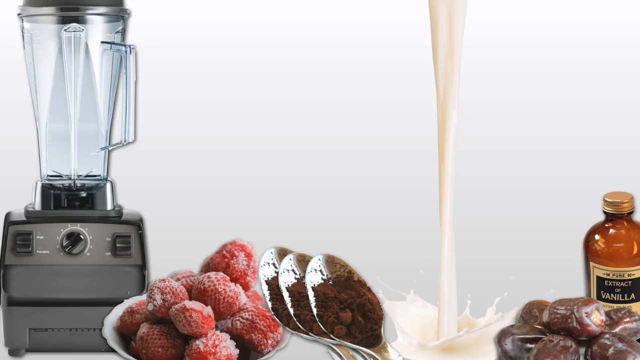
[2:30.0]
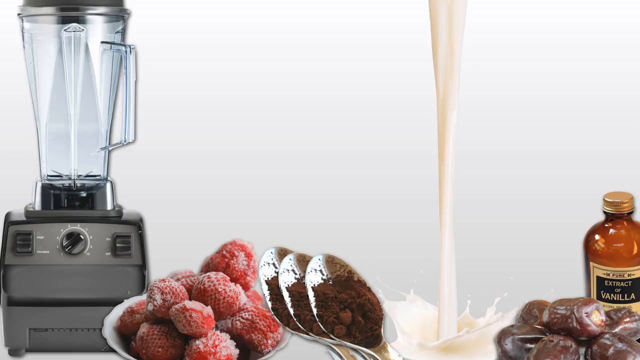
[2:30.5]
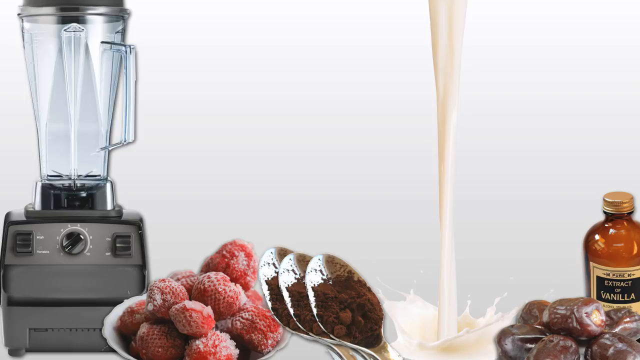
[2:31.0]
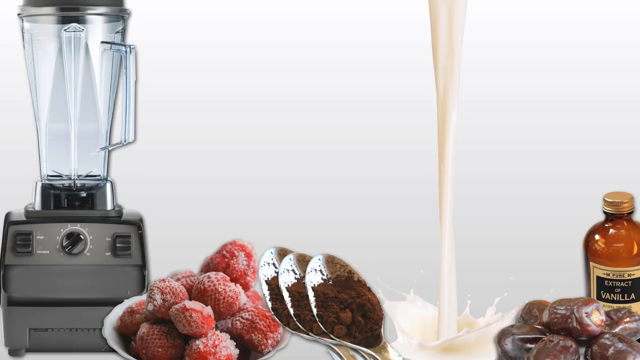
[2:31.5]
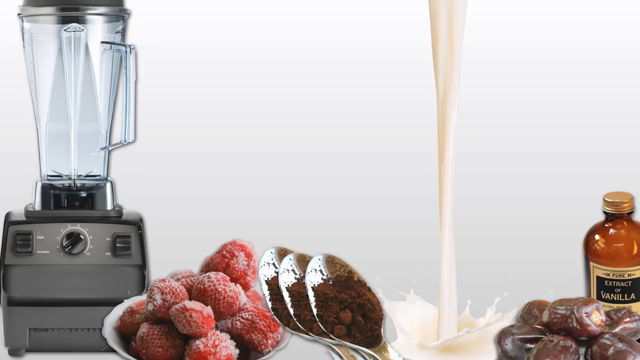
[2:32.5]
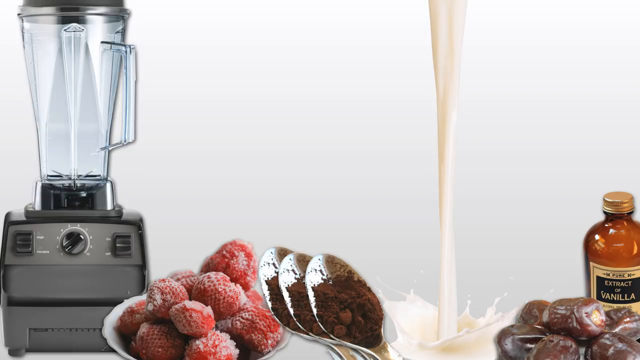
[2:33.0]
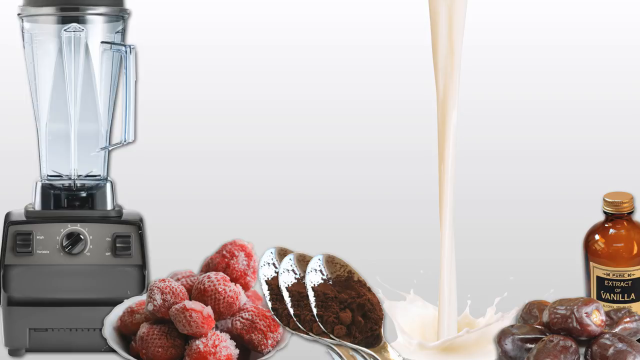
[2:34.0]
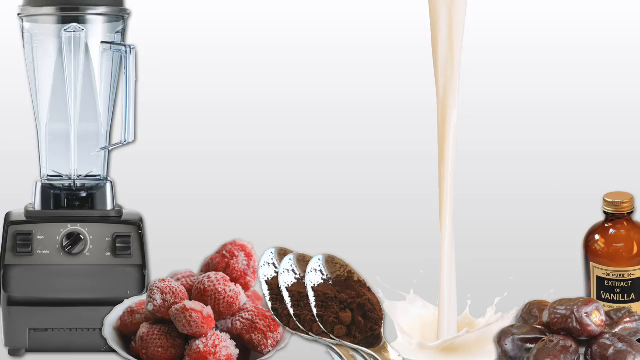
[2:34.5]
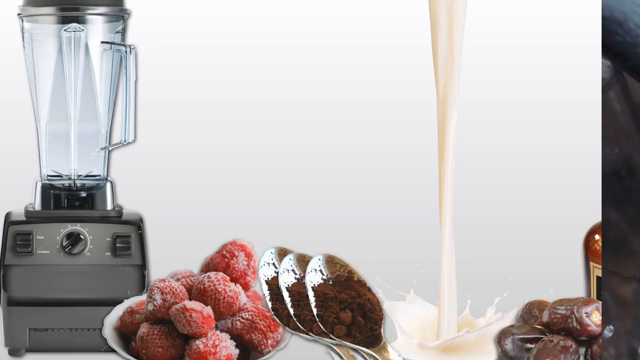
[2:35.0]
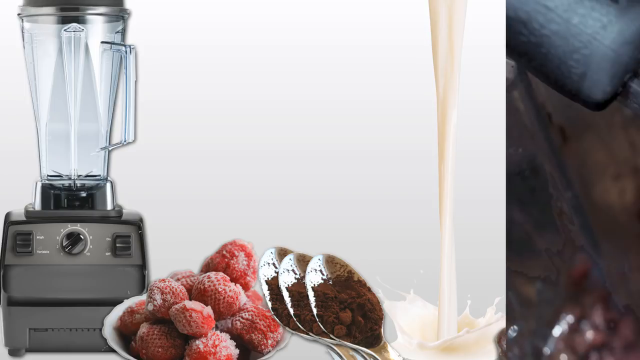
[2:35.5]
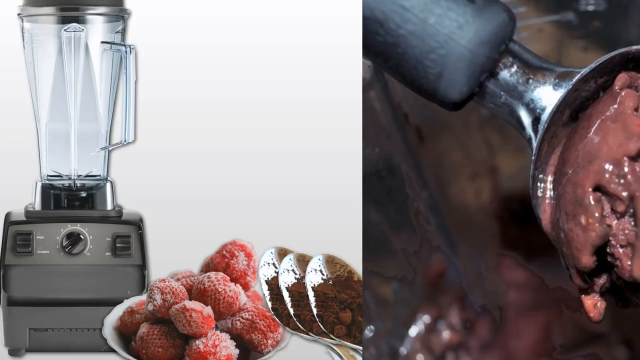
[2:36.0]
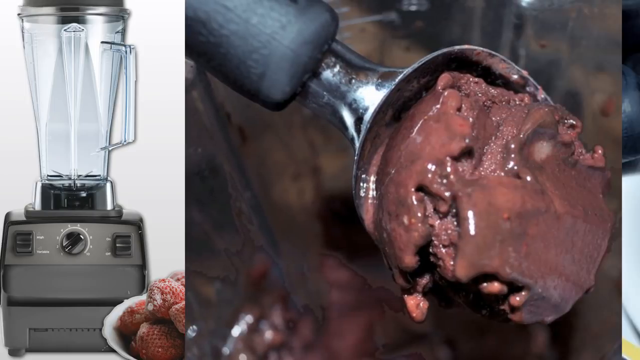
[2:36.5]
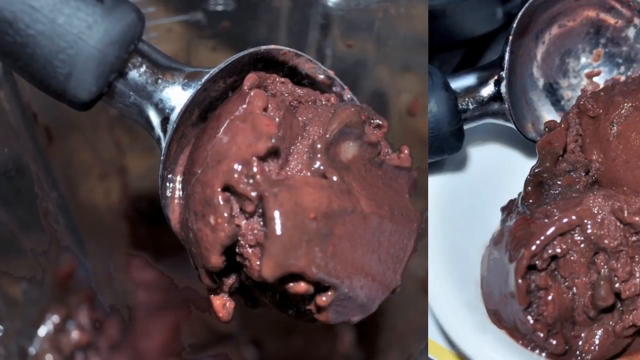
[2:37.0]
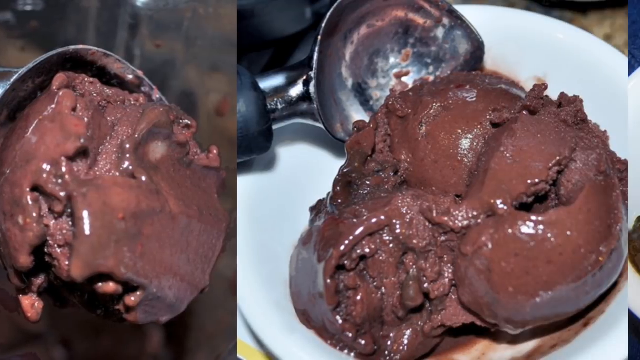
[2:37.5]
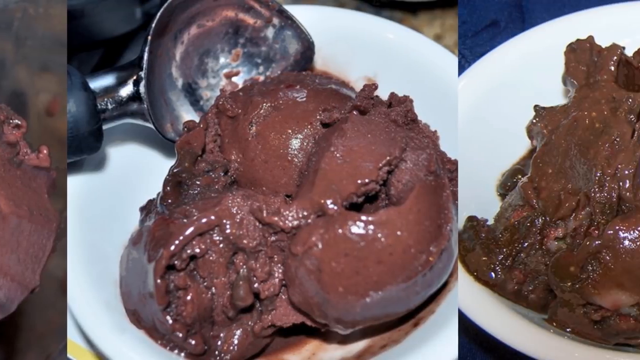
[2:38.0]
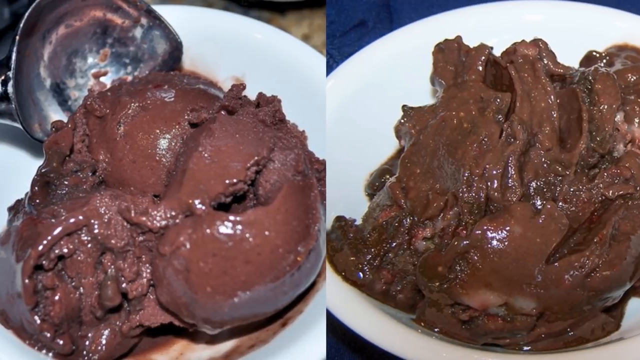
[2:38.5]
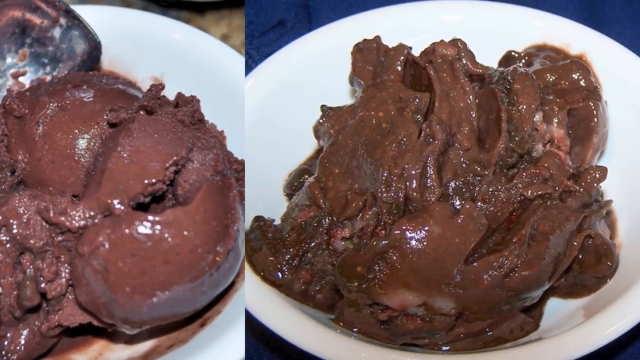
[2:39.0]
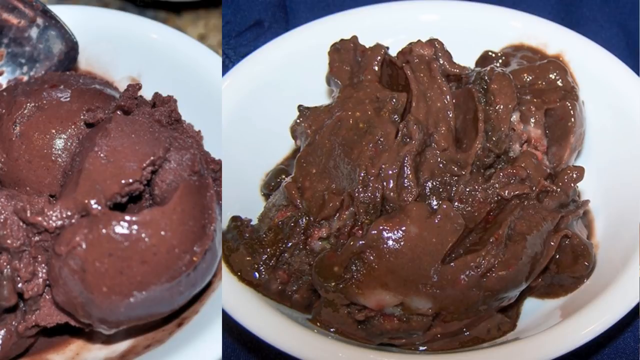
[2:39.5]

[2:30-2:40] On a plain background, several ingredient images are near the borders. From the left: a mixer jar, a plate of strawberries, three spoons of cocoa powder, milk flowing from the top and splashing on the ground, partly visible dates, and vanilla extract in a glass bottle. This is shown for about 10 to 15 seconds. Then a new screen slowly slides in from the left with images of a chocolate scoop, the chocolate scoop placed on a plate, and then the plated scoop alone on the screen. The plate is on a blue background.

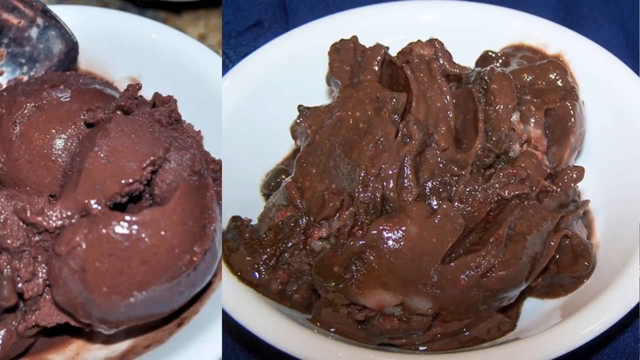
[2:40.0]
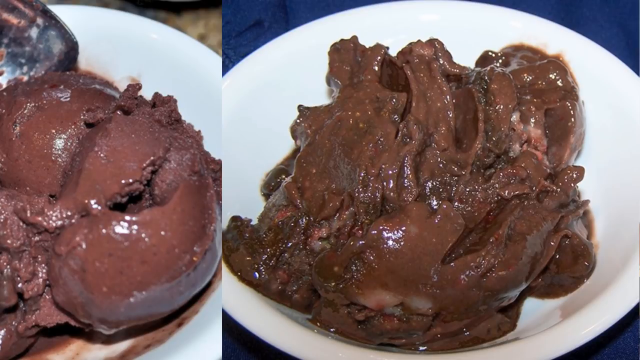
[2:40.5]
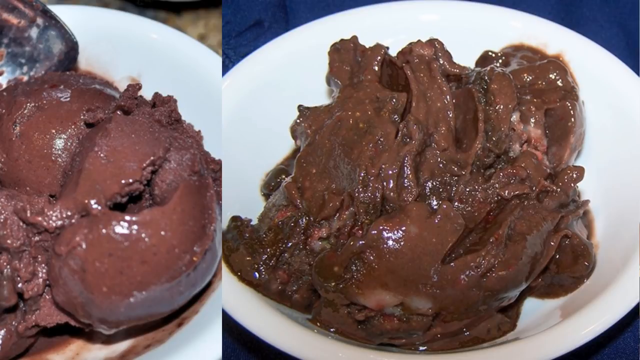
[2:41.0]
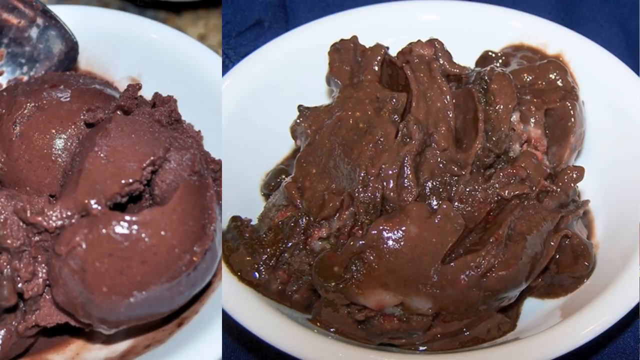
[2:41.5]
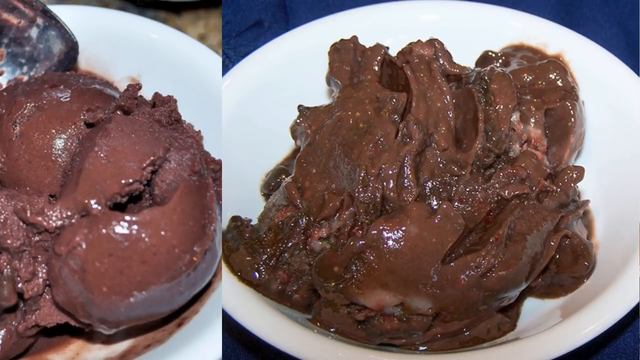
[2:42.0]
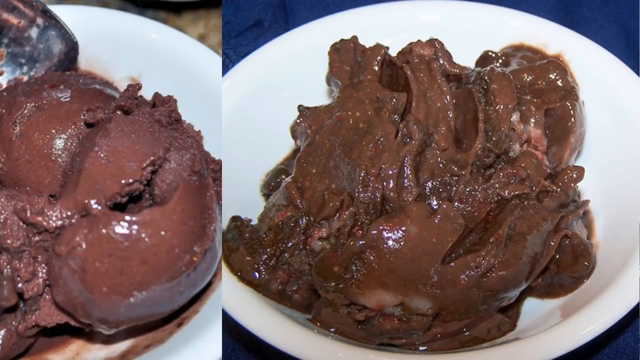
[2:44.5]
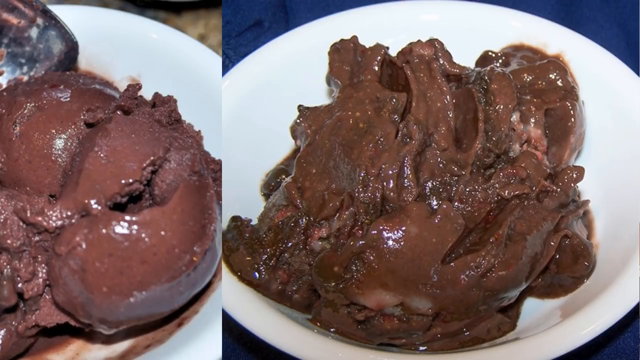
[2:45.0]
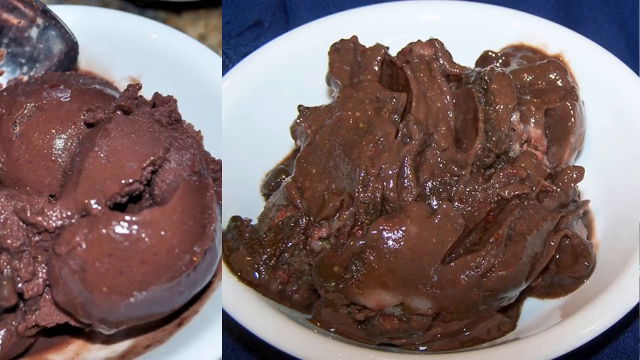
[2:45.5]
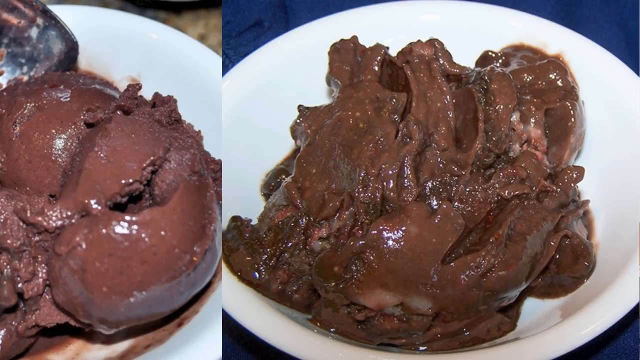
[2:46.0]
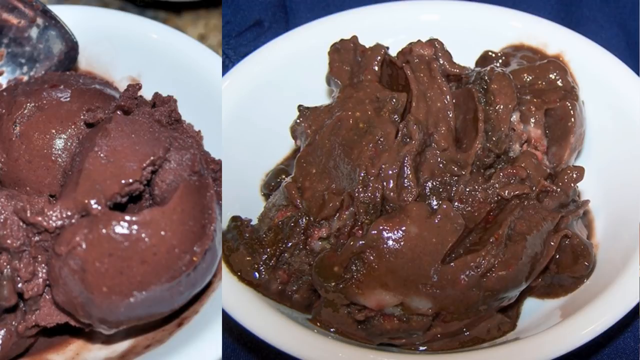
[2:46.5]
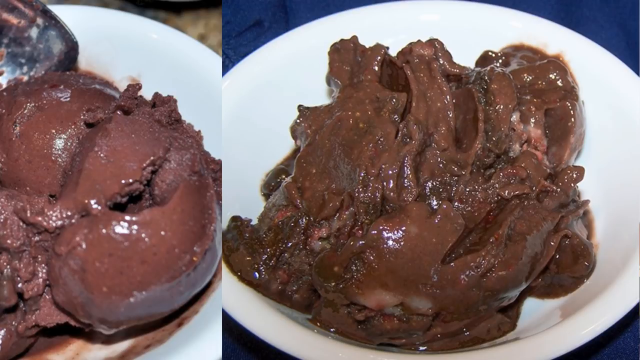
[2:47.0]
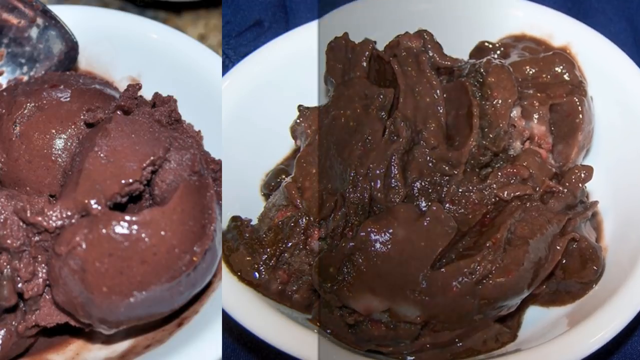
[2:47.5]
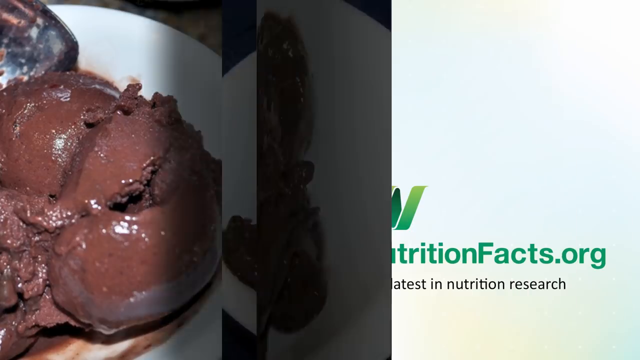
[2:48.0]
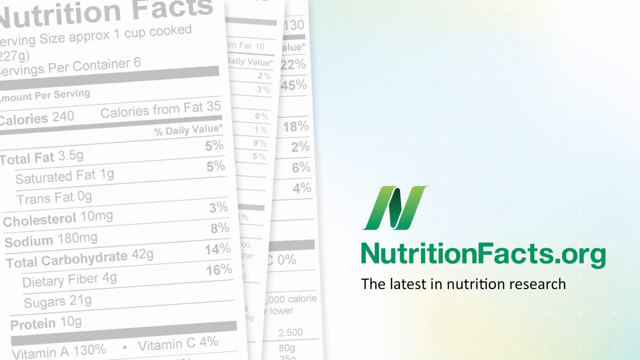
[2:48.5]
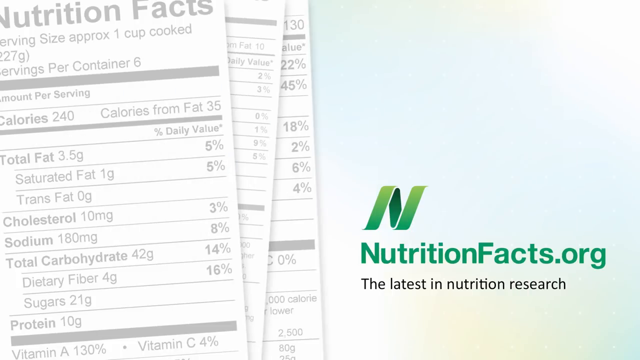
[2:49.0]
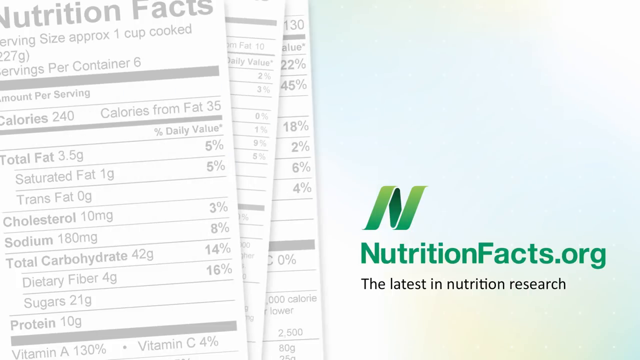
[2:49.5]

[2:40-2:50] A split screen shows two images. On the left, a brown chocolate scoop is plated on a white round table that is partly visible, with a scoop also partly visible at the top. The right image gives a clear view of the chocolate on a white plate on a blue background; the chocolate or ice cream has a thick consistency and looks like it is melting. The screen changes with a flipping effect, and the first screen is shown again: the NutritionFacts label paper in the background, "nutritionfacts.org" written at the bottom left in green with an N logo, and "latest in nutrition research" written in black at the bottom.